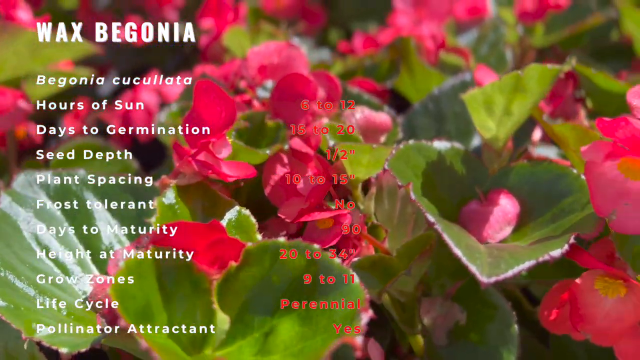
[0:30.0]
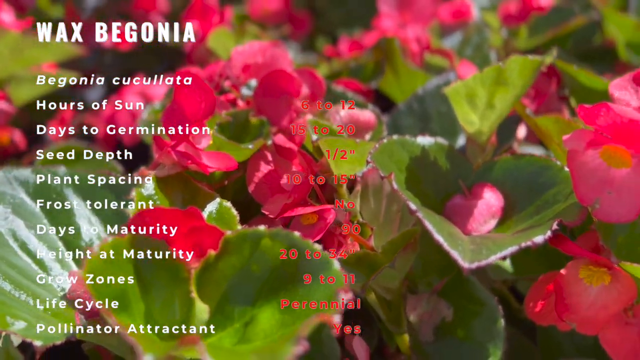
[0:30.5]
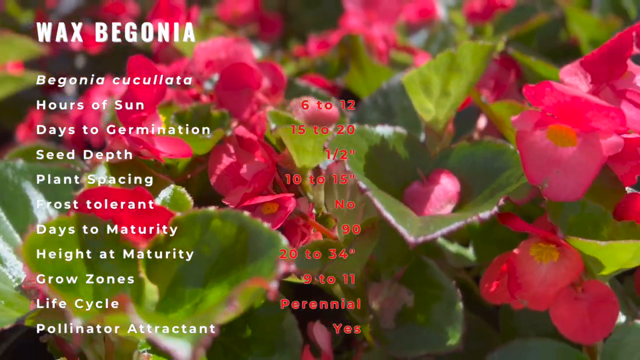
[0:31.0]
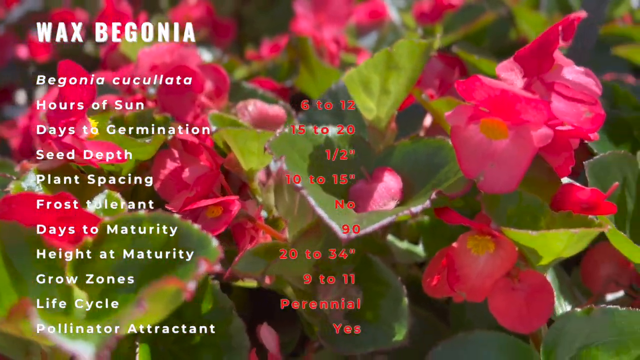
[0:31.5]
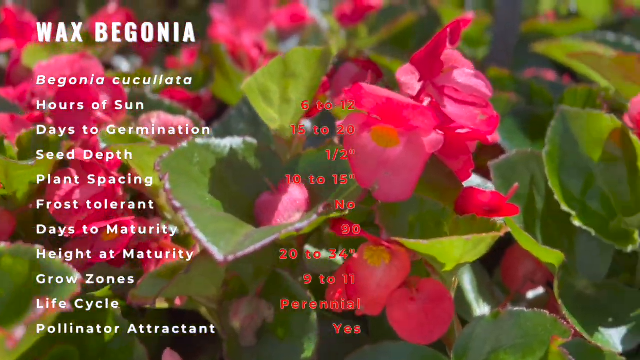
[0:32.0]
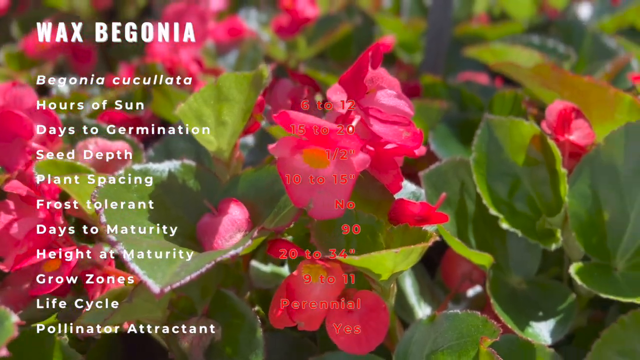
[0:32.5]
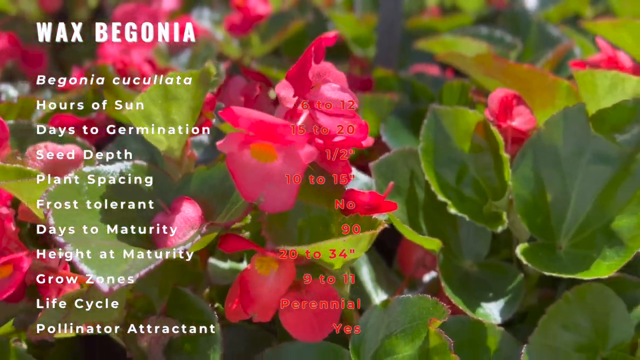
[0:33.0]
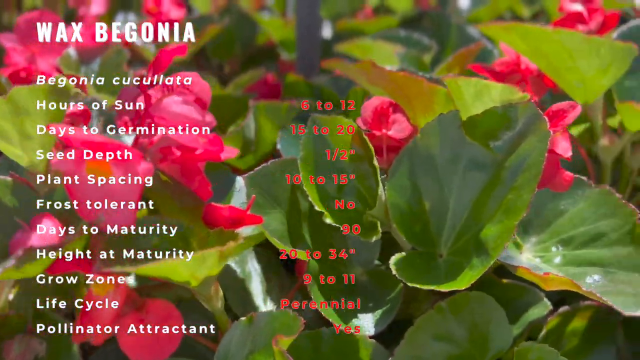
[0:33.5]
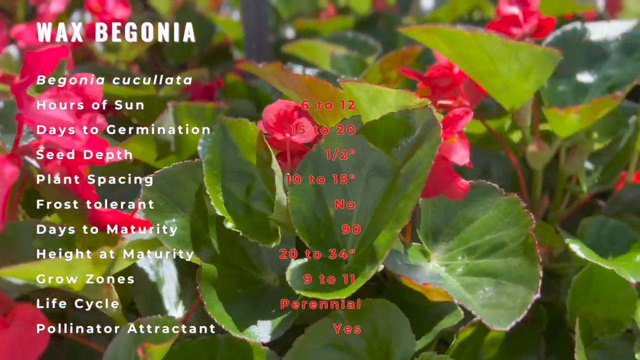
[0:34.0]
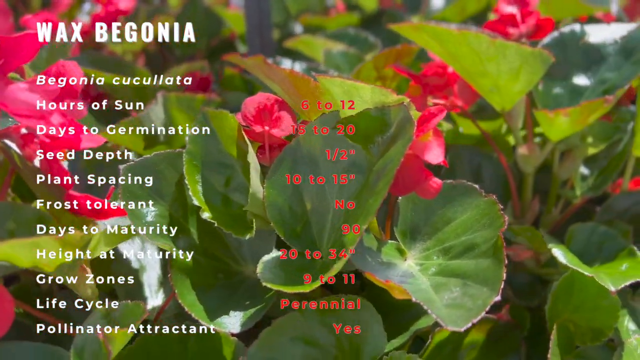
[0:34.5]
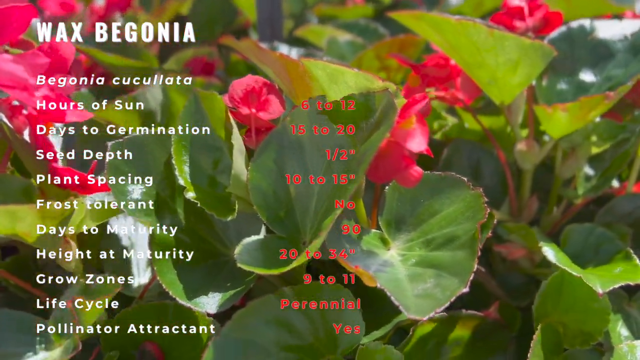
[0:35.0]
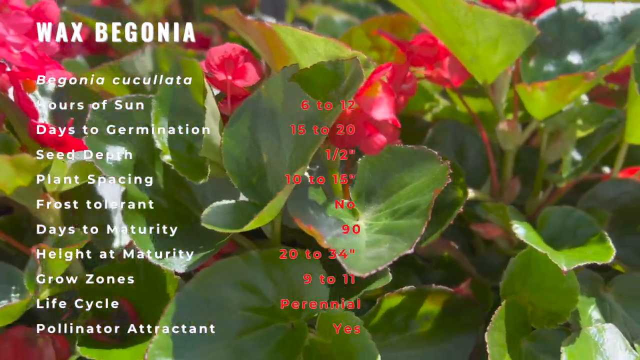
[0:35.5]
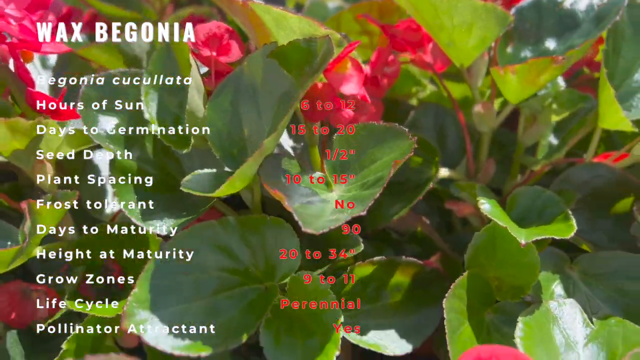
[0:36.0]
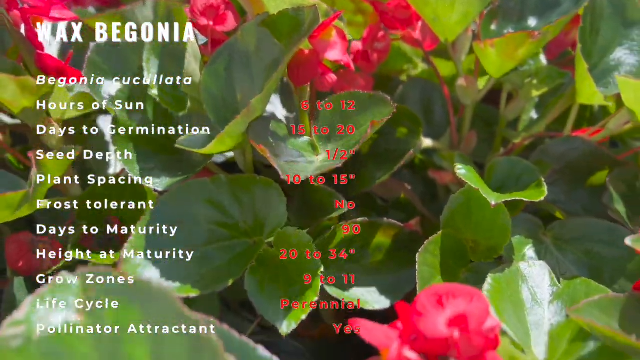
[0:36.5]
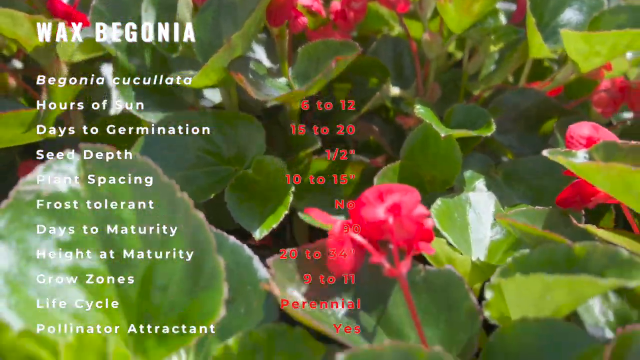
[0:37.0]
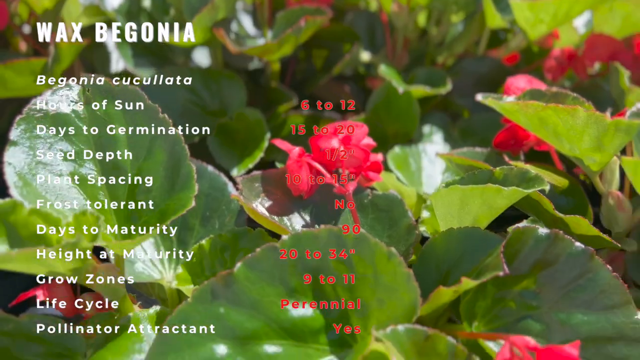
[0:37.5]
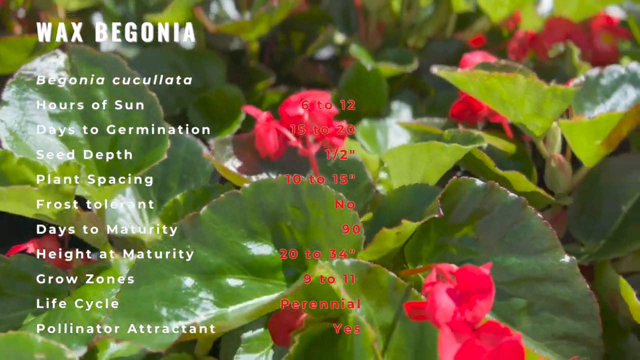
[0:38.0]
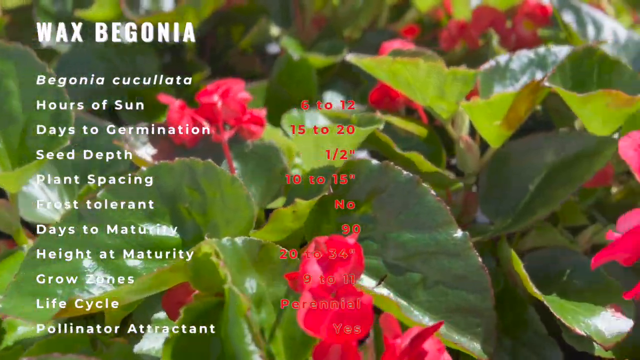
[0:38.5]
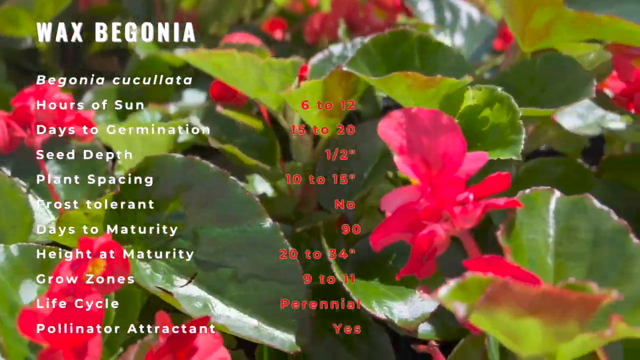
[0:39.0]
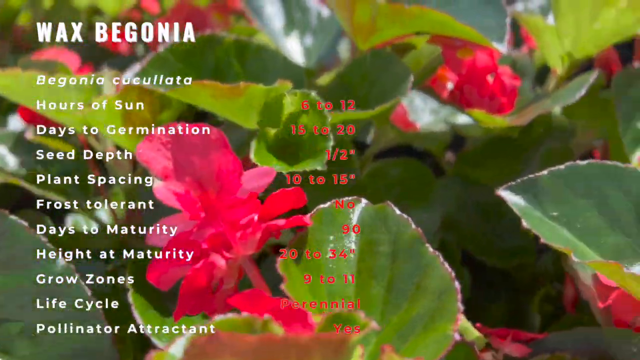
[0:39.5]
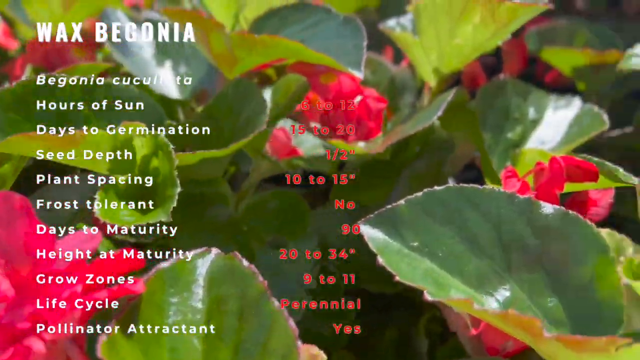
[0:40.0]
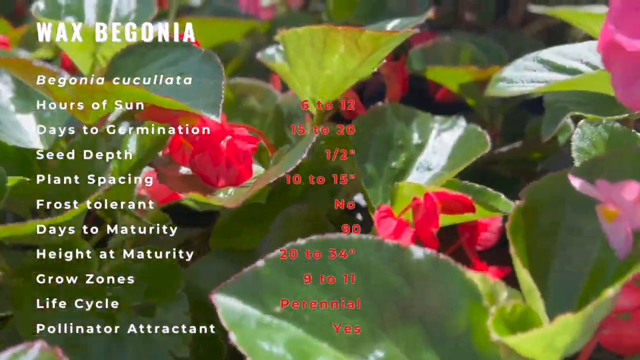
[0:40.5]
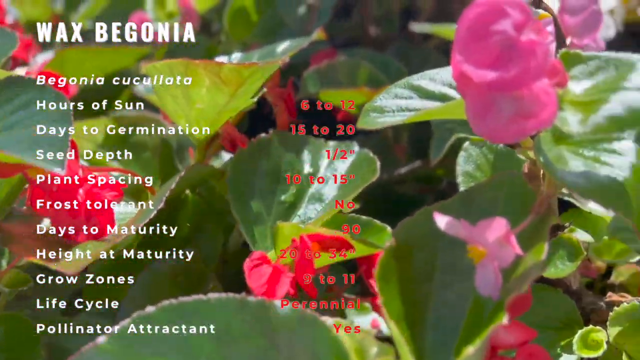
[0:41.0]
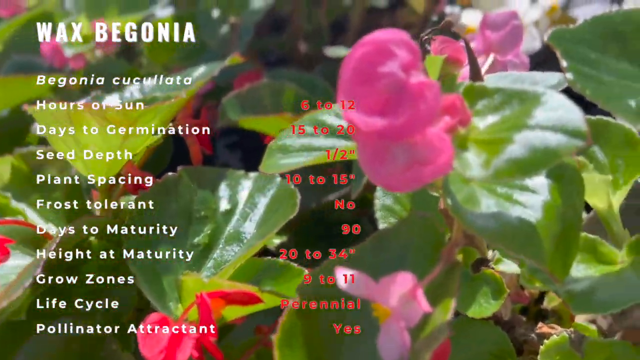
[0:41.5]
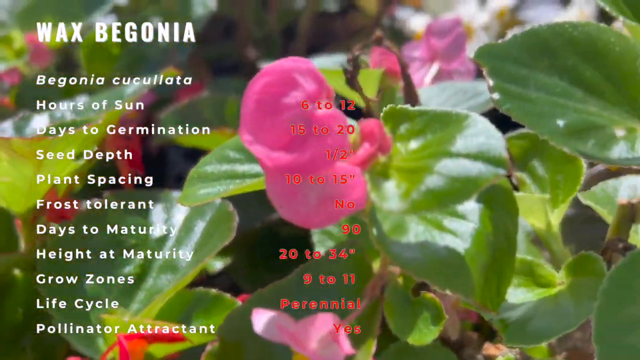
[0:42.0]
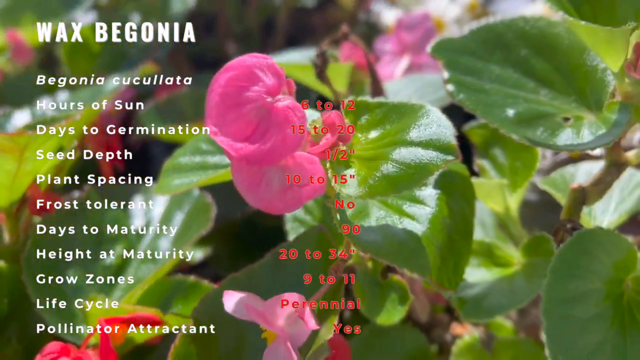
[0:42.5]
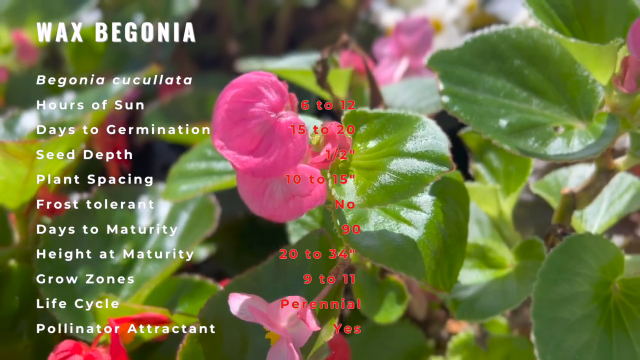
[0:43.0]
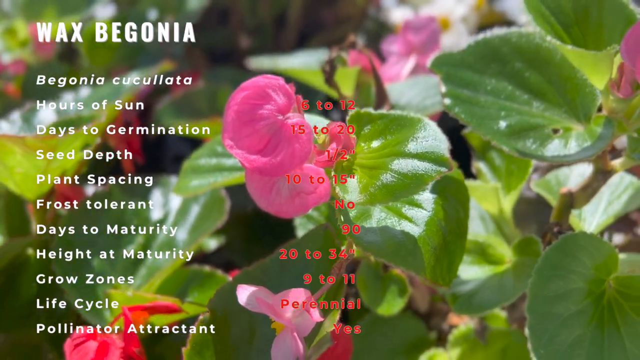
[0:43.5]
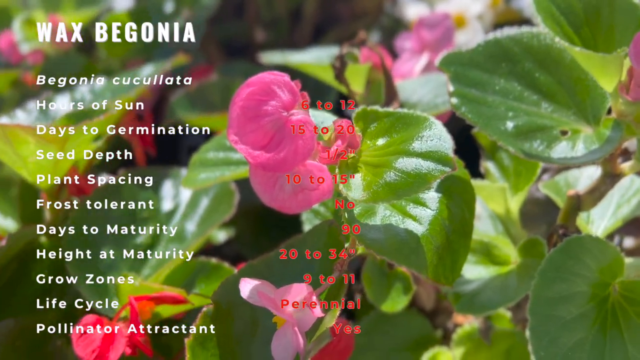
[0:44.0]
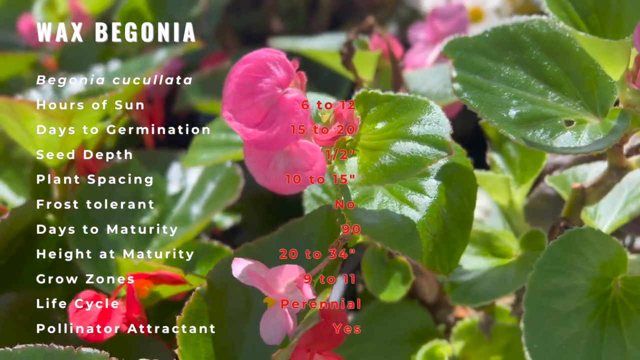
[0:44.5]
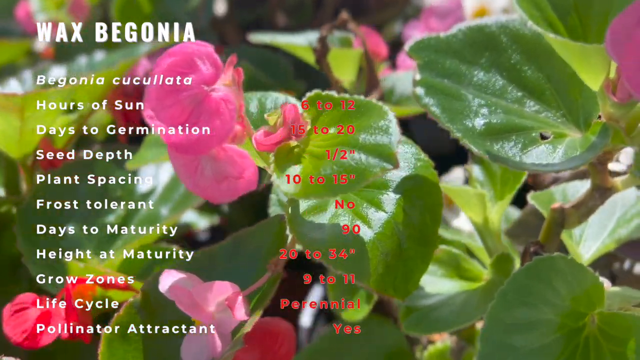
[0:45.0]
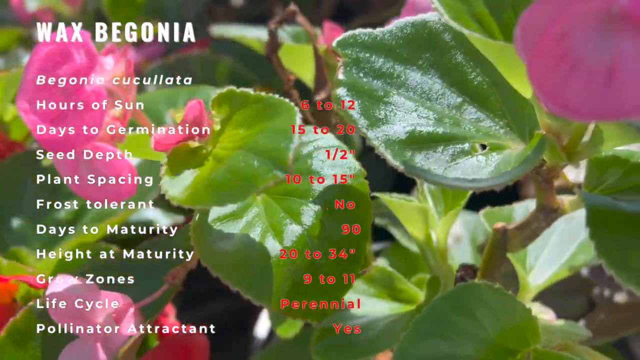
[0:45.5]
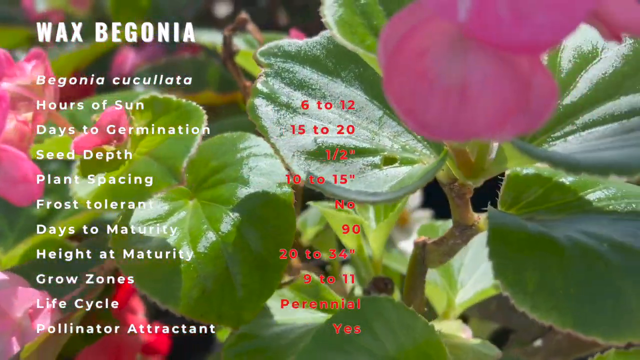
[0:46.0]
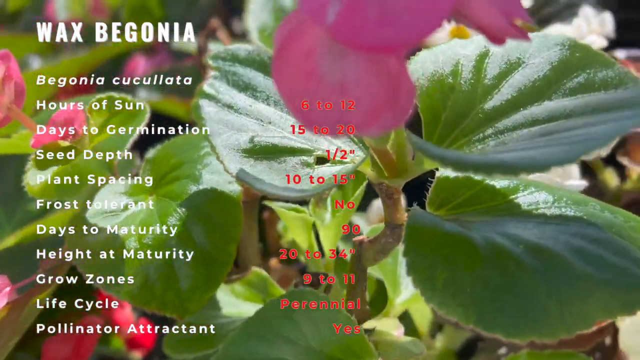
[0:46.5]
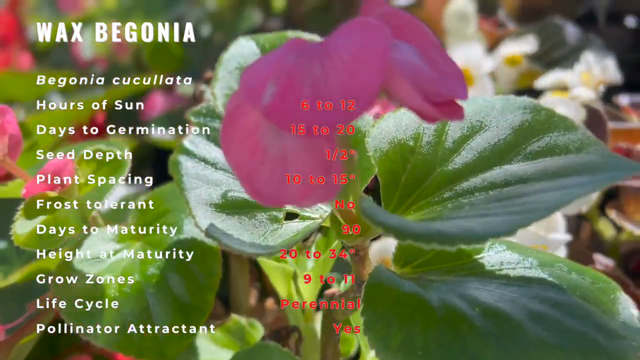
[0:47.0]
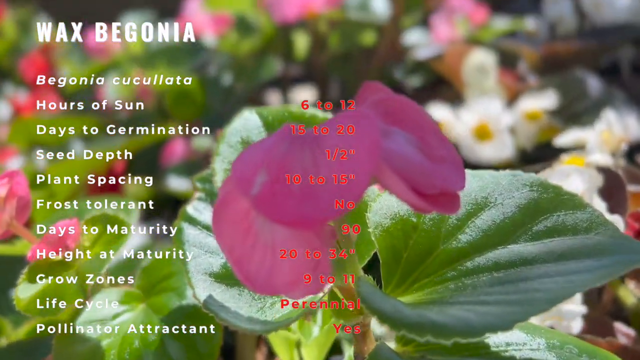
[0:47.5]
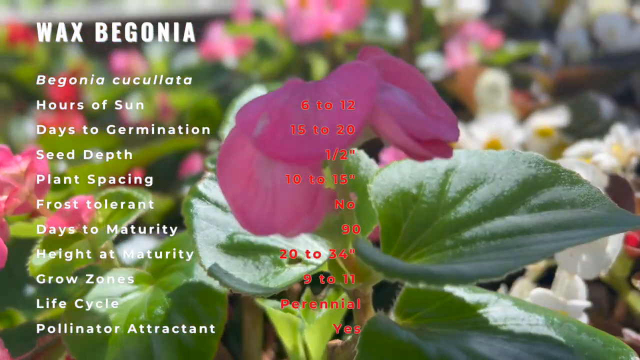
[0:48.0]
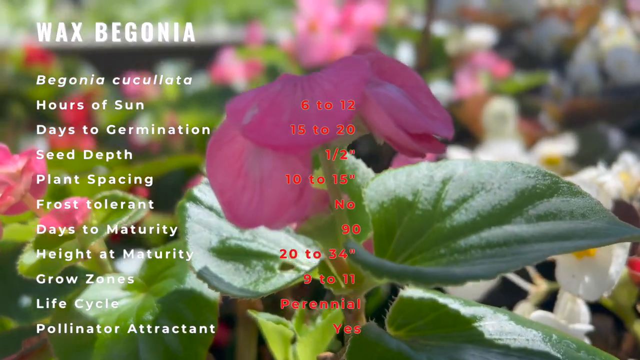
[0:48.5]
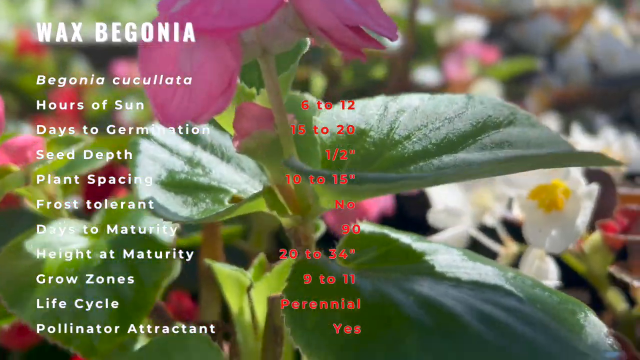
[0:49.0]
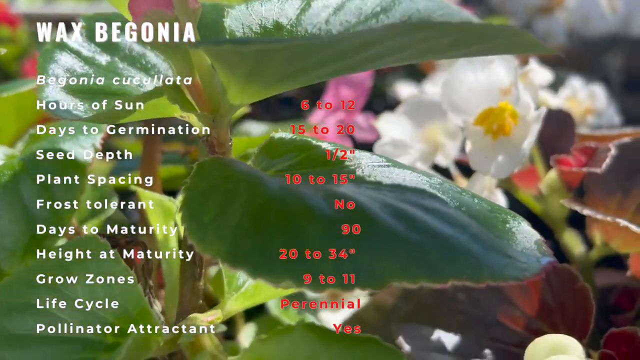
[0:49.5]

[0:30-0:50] A bunch of pink flowers with multiple very large petals is shown zoomed in; the flowers themselves are not huge. Green leaves surround them, and the plant seems like a bush of some kind. Sunlight comes down on it, showing the scene is outside. The camera moves around, showing various parts of the flowers, and nothing other than the flowers is ever visible. There is white text on the left and red text on the right; the red text is poor quality and impossible to read. The white text reads "Wax Begonia, Begonia cuculata, hours of sun, days to germination, seed depth, plant spacing, frost tolerant, days to maturity, height, maturity and growth zones," and, though hard to read, also "life cycle."